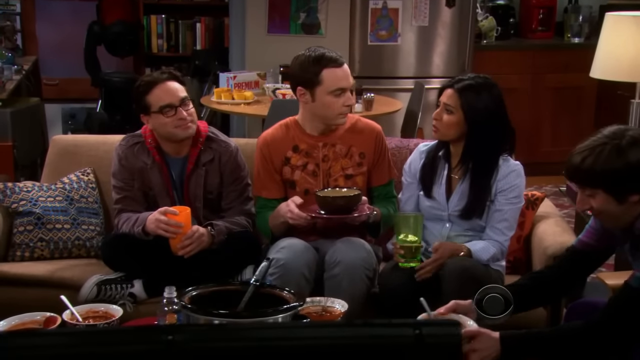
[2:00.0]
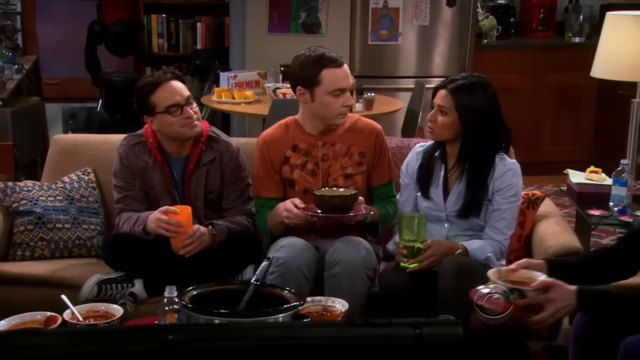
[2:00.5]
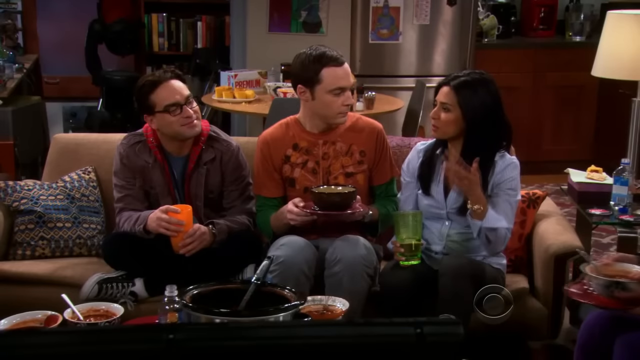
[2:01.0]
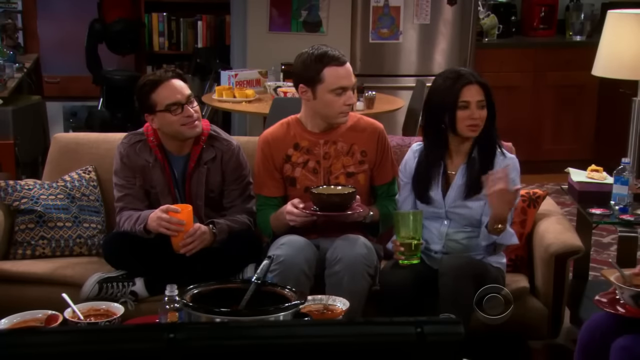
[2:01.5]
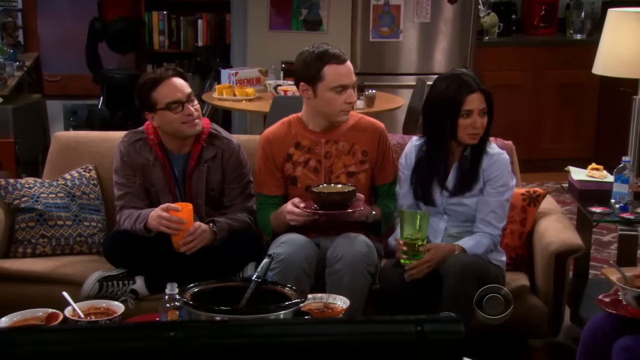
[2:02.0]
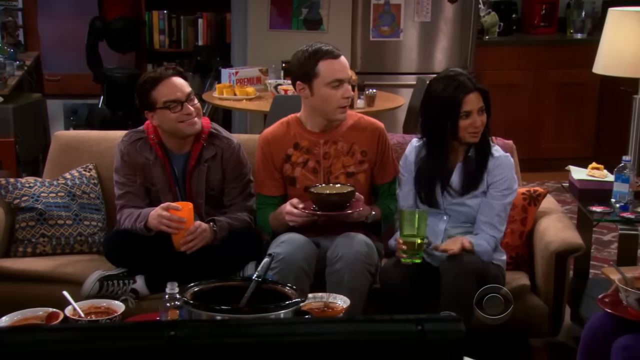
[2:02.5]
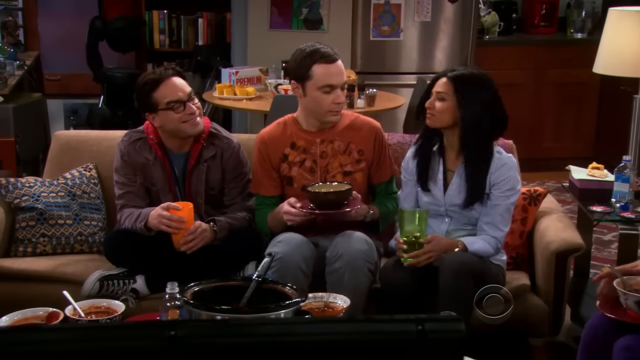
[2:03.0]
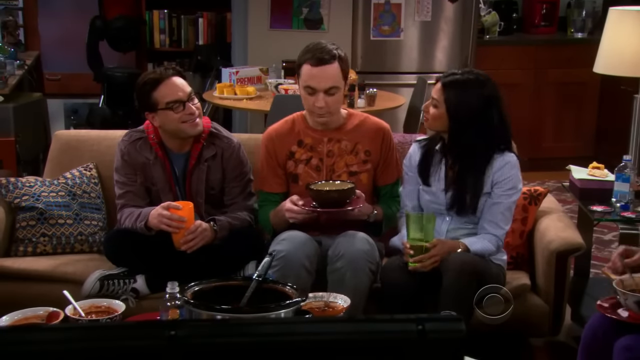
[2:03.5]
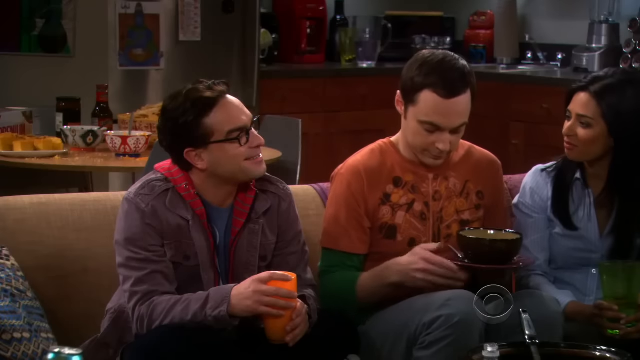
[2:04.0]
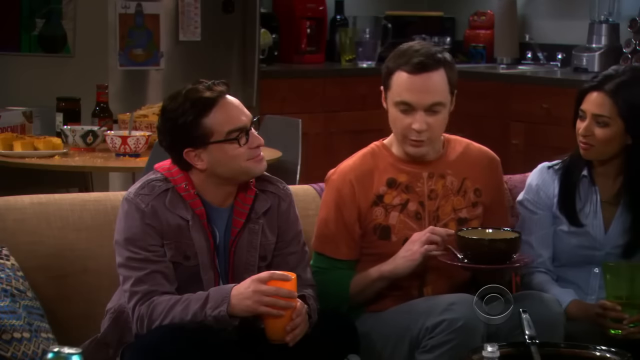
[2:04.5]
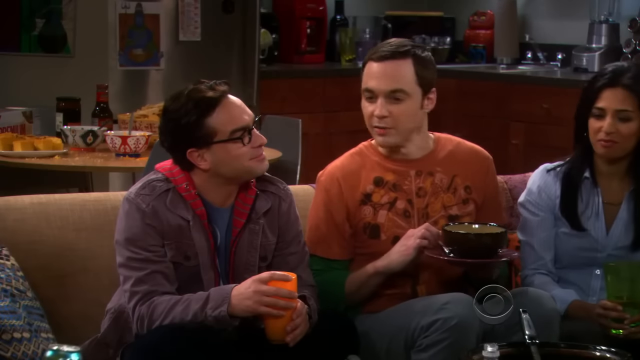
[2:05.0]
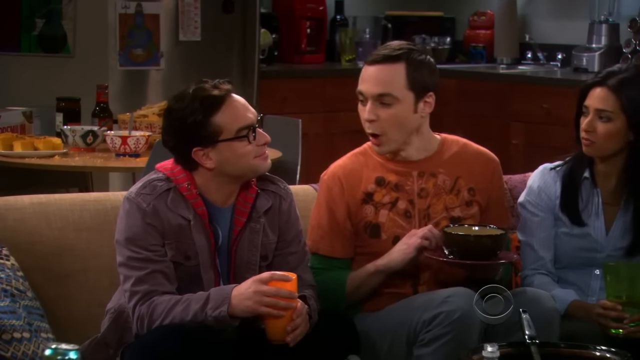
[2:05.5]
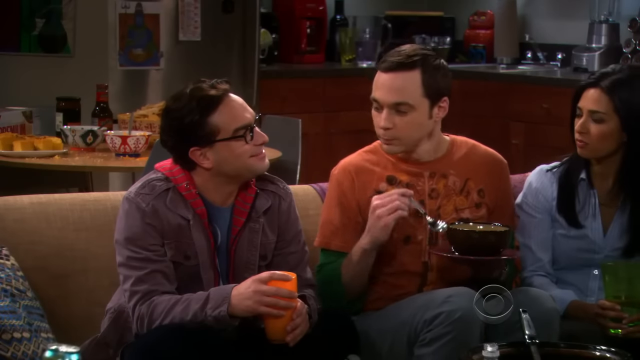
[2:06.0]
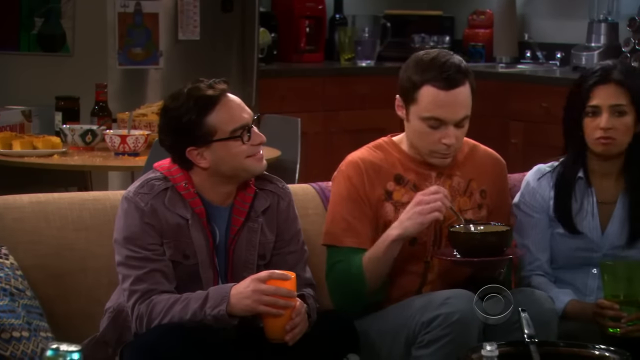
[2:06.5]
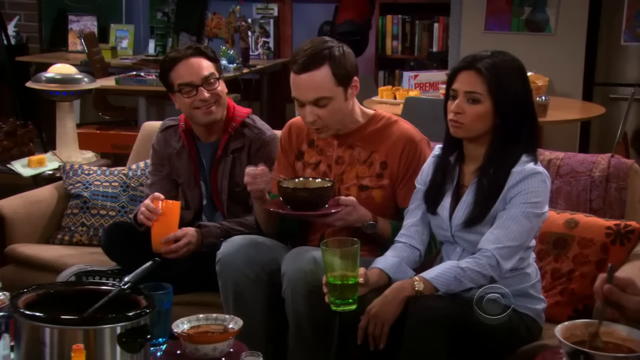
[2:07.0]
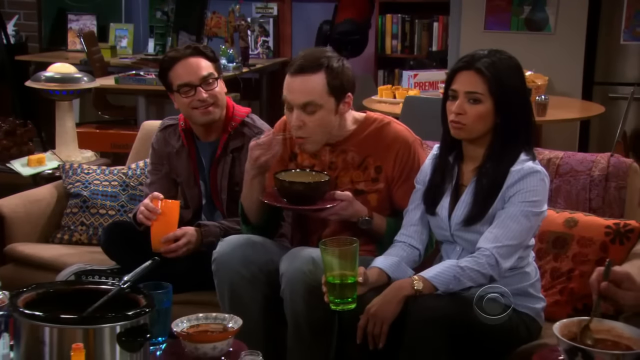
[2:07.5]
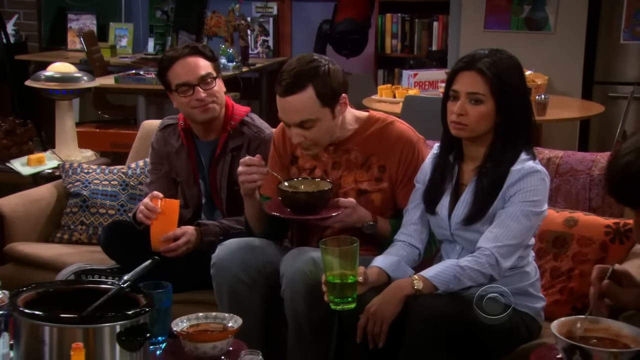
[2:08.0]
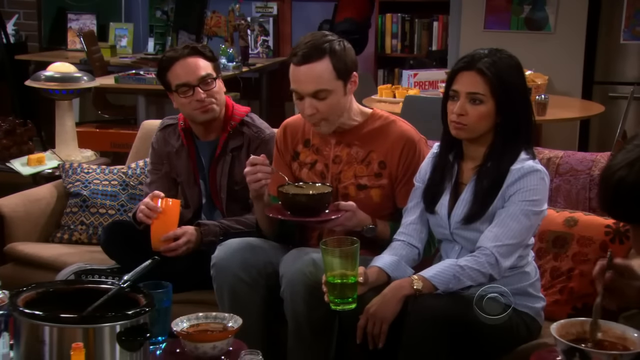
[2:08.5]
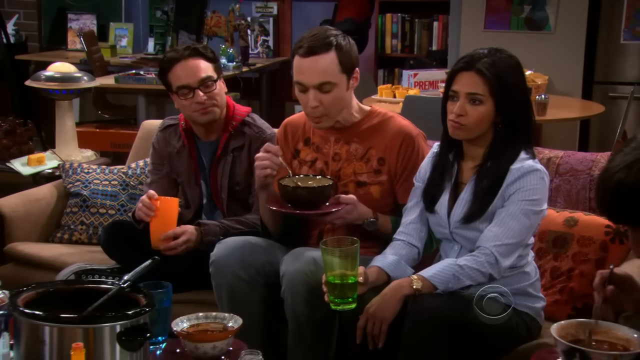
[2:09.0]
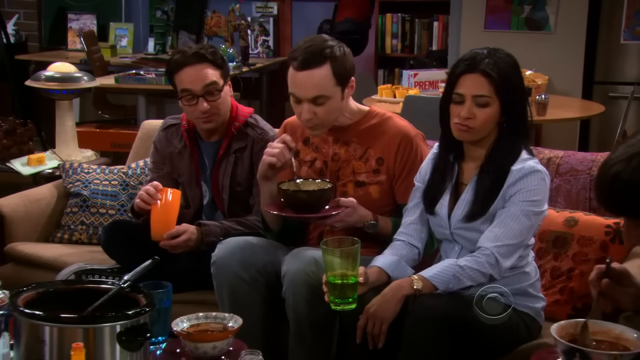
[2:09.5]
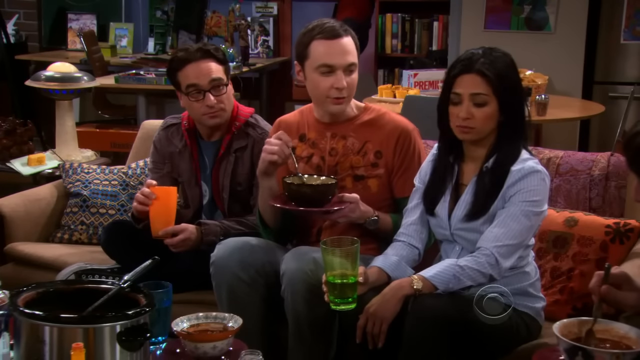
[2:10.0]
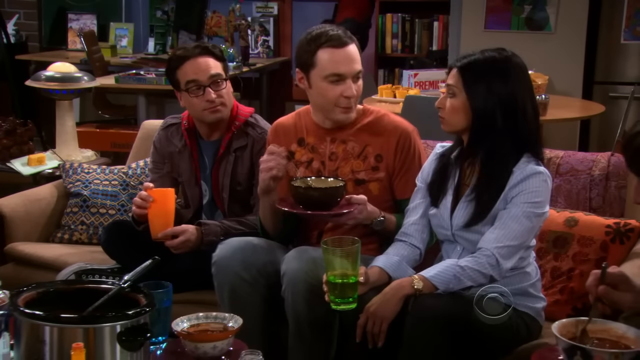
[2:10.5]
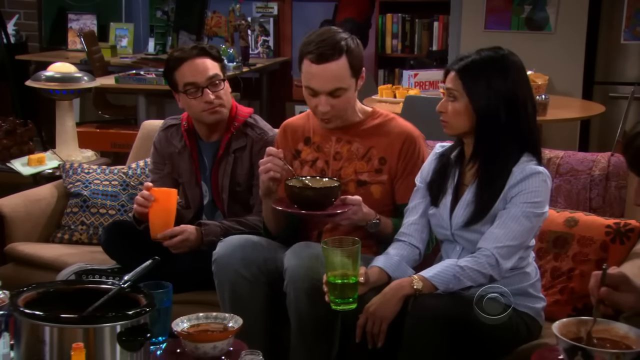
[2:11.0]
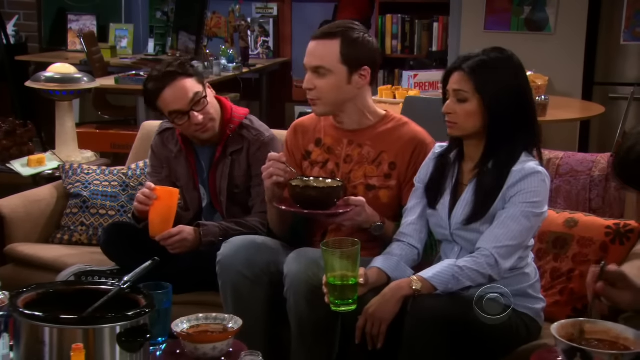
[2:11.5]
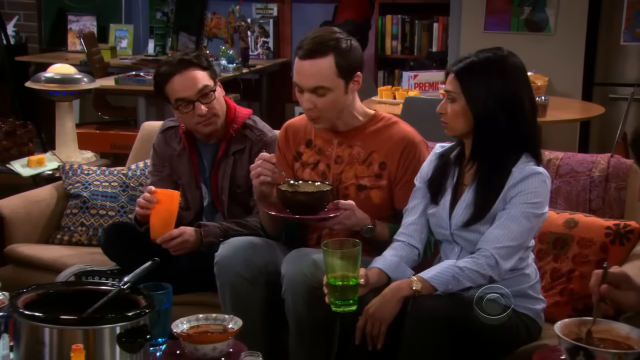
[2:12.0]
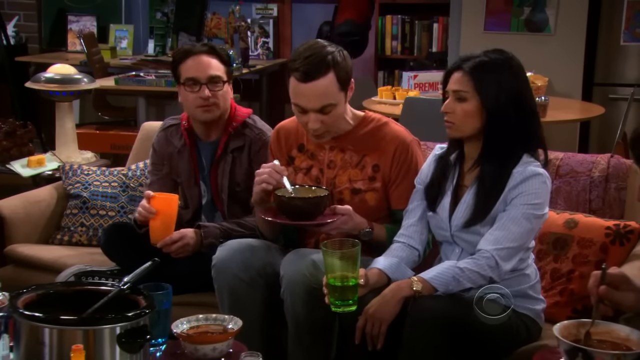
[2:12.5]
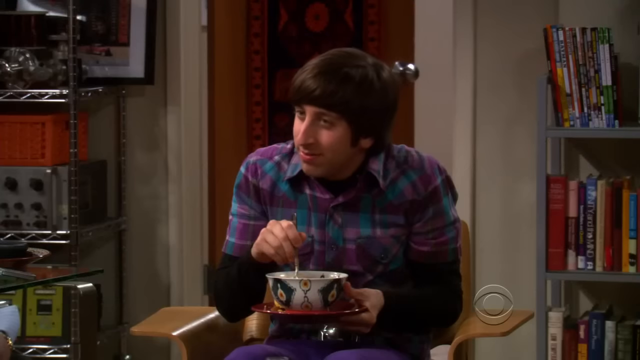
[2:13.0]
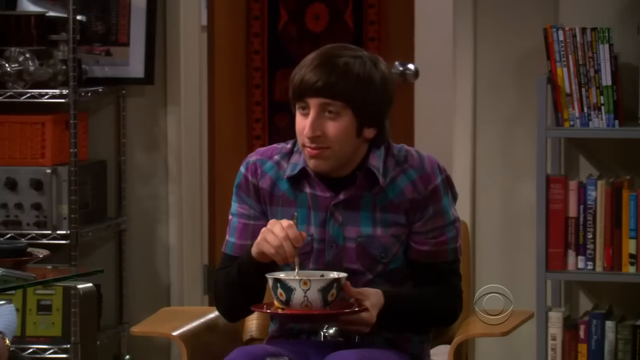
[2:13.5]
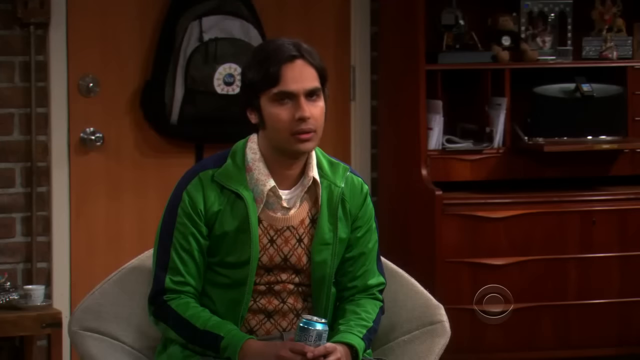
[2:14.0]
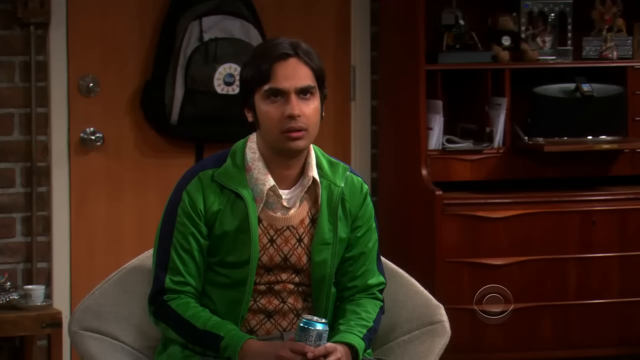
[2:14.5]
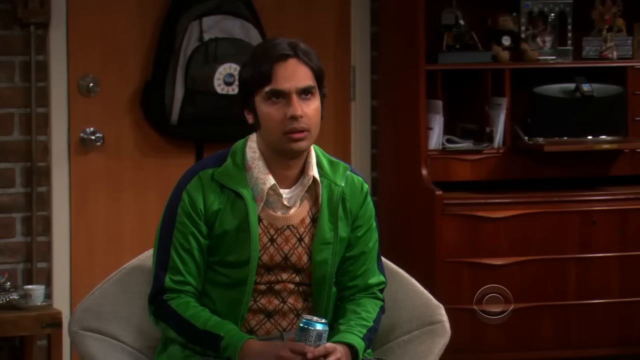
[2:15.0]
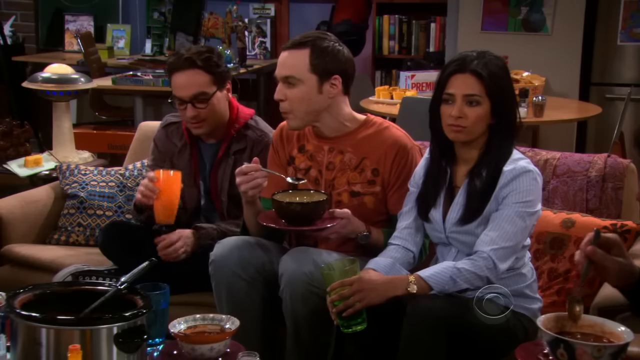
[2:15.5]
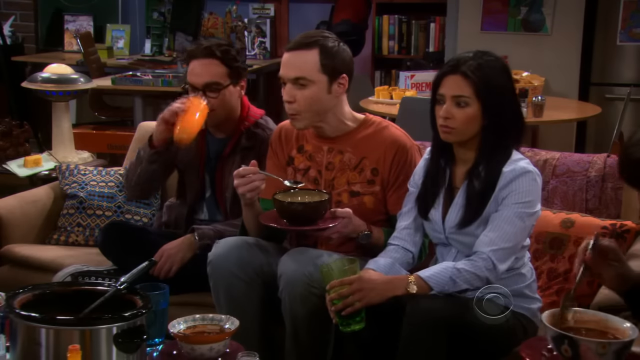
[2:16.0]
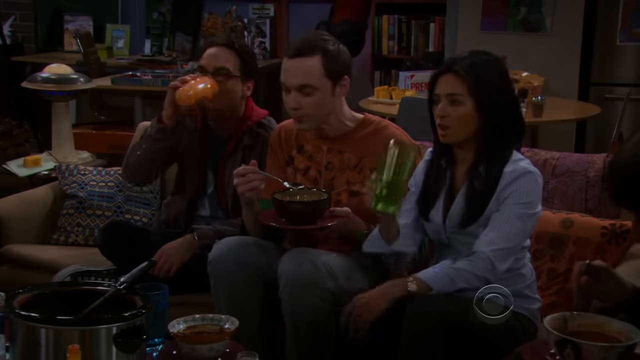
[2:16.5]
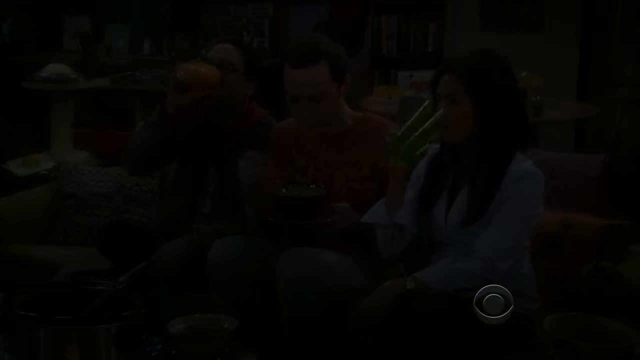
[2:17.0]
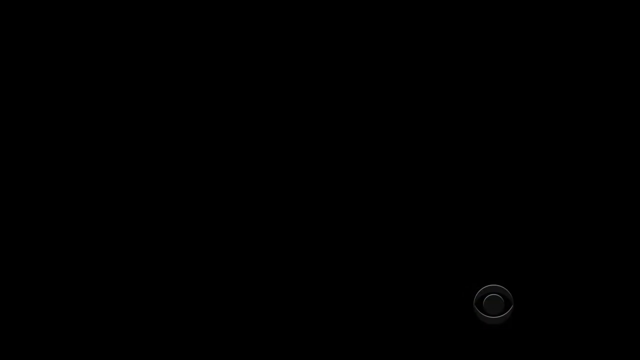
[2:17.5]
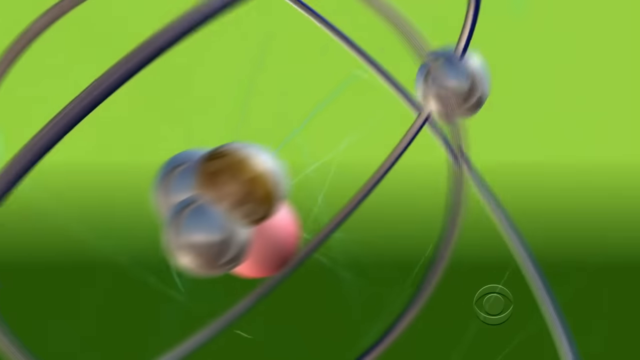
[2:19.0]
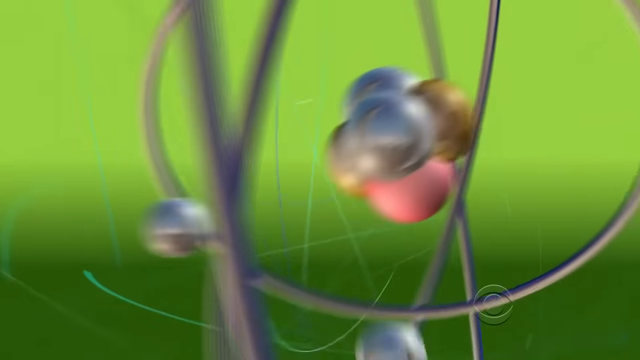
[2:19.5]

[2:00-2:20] Sheldon, Leonard and Raj's girlfriend sit at the table. Sheldon says something quickly to Leonard before trying his soup, holding the spoon in his right hand. Raj's girlfriend again talks with her hand. One of them has a little smirk, staring at Sheldon as he eats his soup. Howard looks at Raj, and Raj looks annoyed, shaking his head and rolling his eyes. The outer space rings are then shown. Sheldon laughs at Leonard with a smirk on his face.